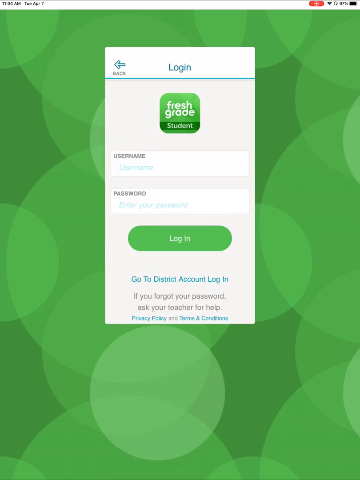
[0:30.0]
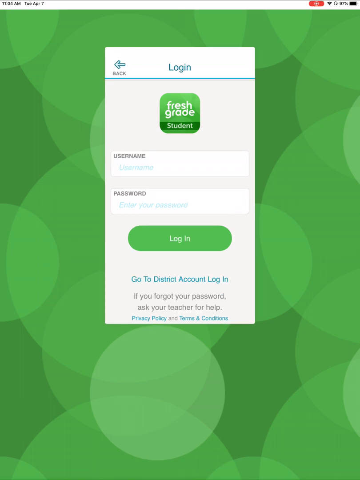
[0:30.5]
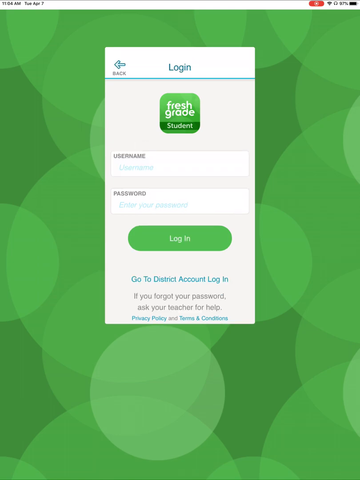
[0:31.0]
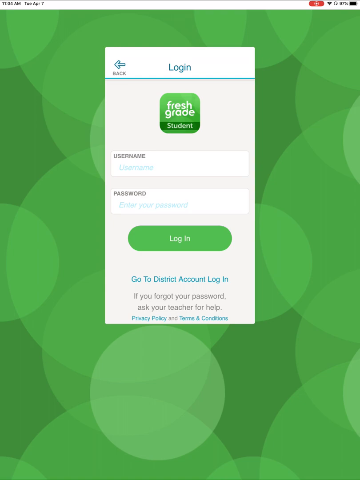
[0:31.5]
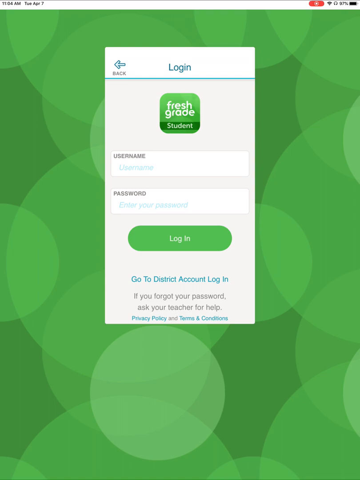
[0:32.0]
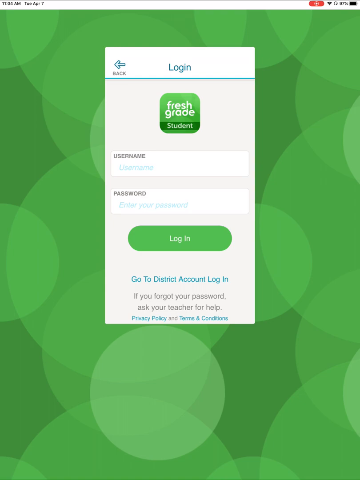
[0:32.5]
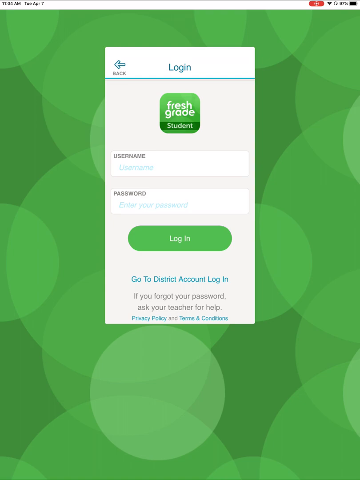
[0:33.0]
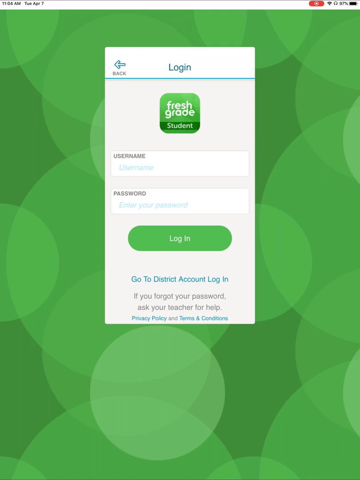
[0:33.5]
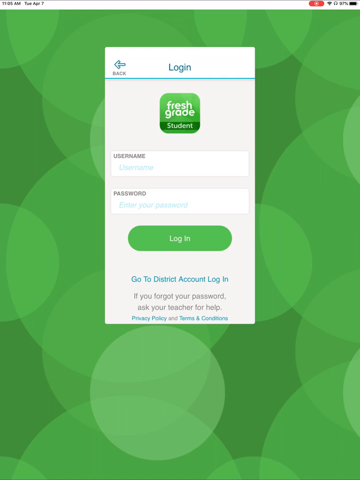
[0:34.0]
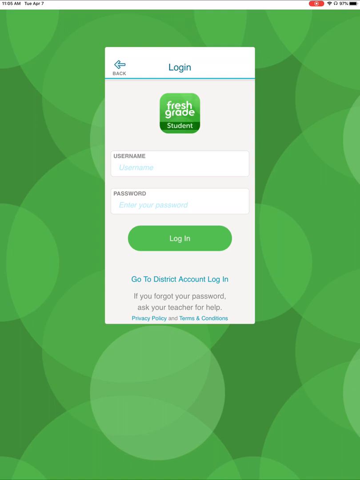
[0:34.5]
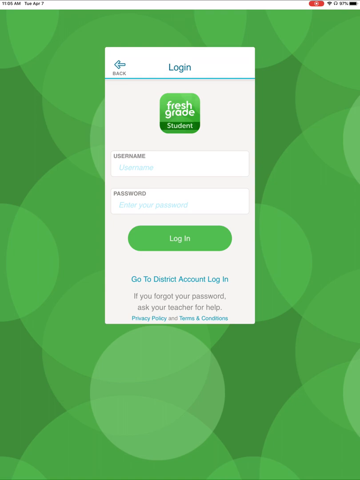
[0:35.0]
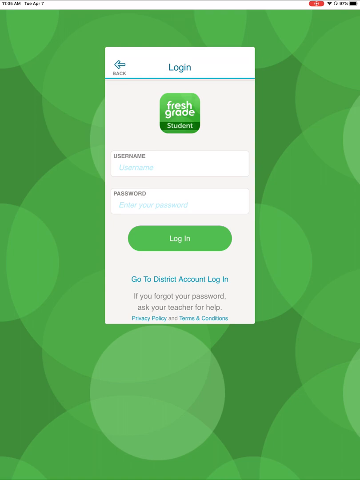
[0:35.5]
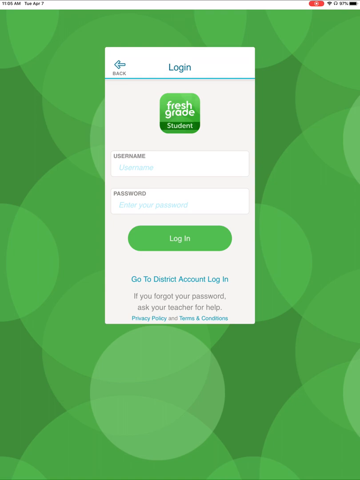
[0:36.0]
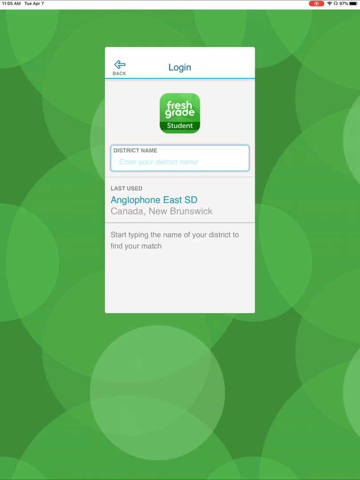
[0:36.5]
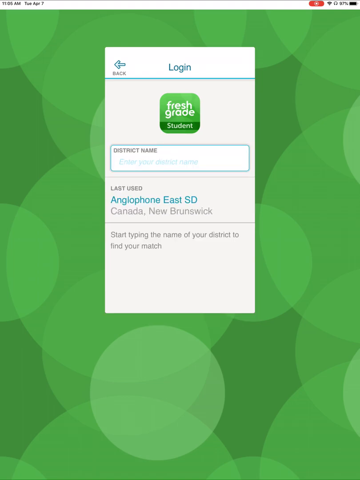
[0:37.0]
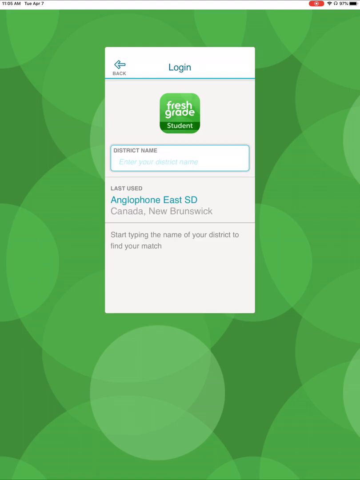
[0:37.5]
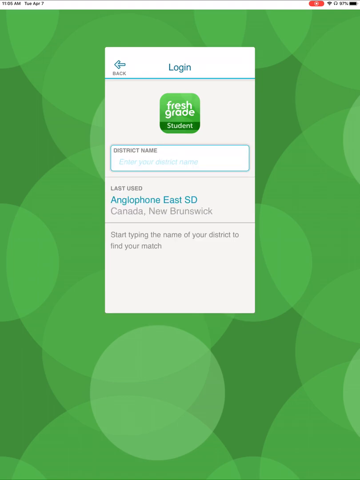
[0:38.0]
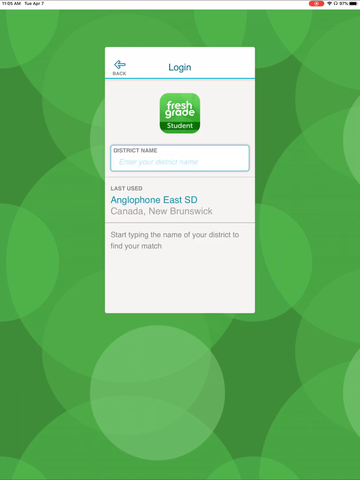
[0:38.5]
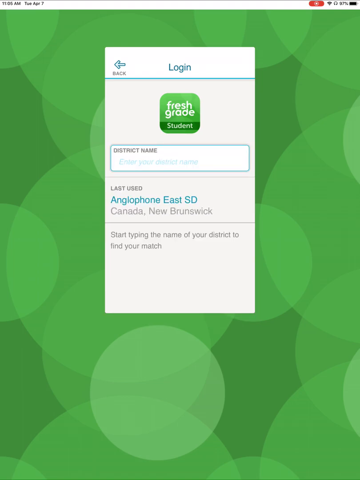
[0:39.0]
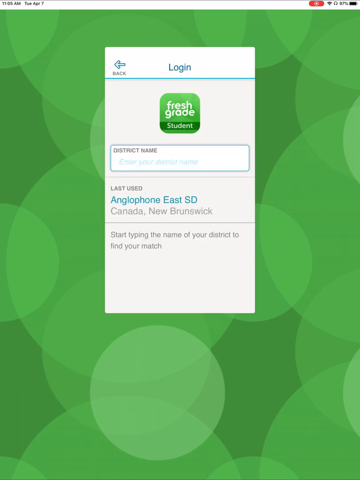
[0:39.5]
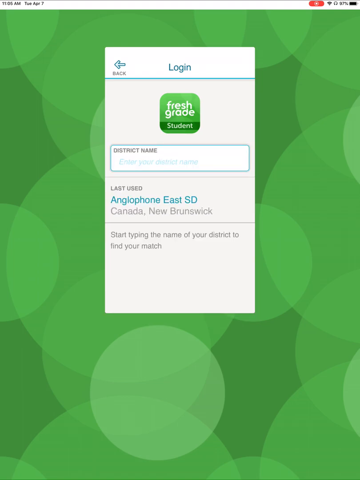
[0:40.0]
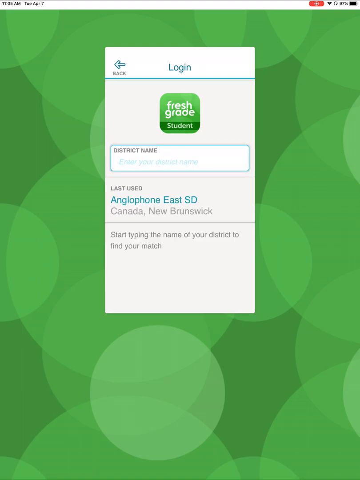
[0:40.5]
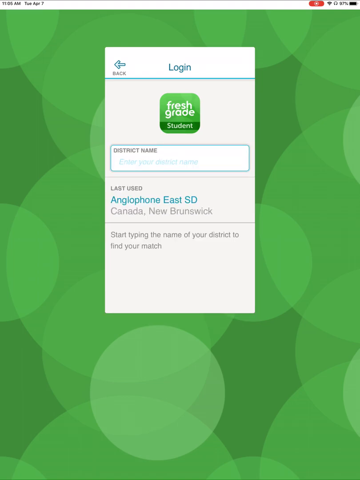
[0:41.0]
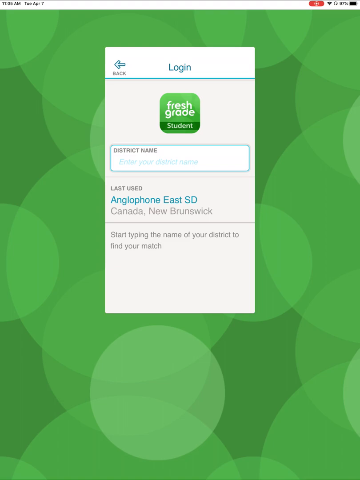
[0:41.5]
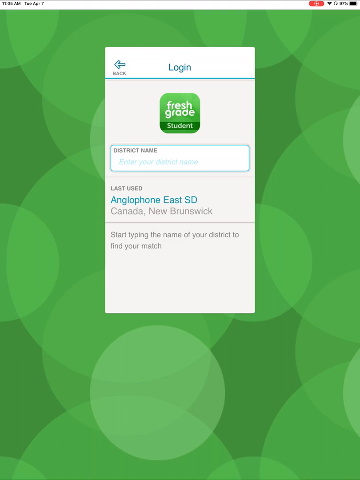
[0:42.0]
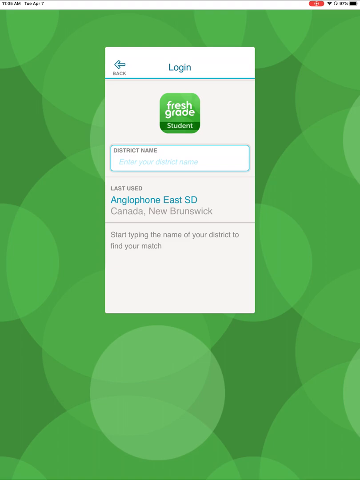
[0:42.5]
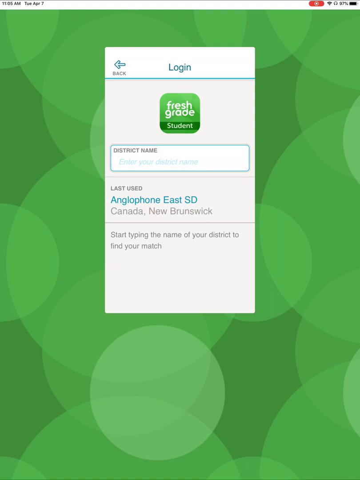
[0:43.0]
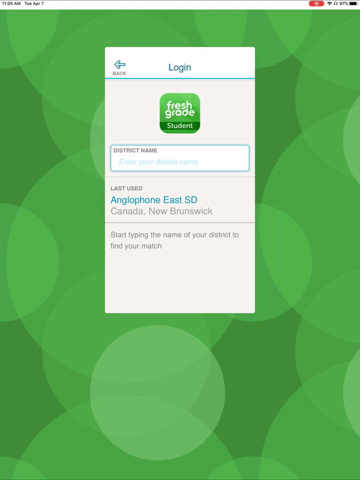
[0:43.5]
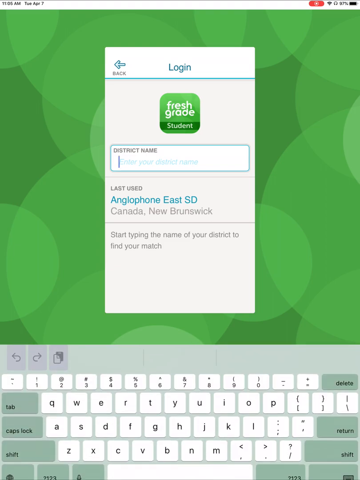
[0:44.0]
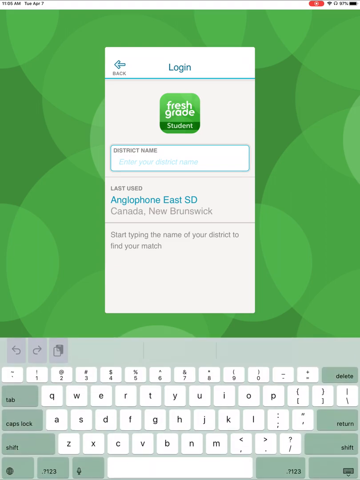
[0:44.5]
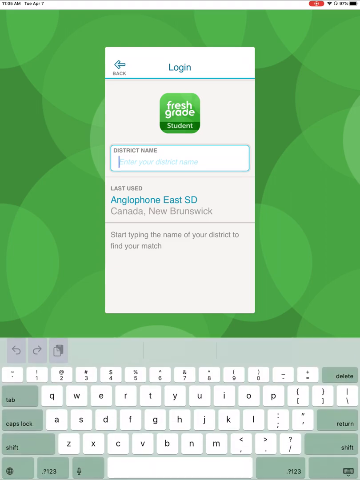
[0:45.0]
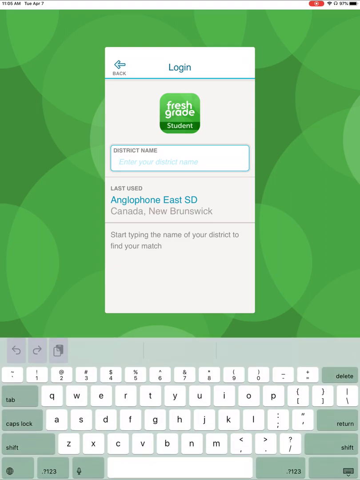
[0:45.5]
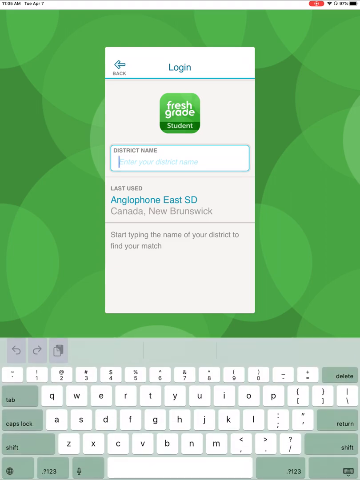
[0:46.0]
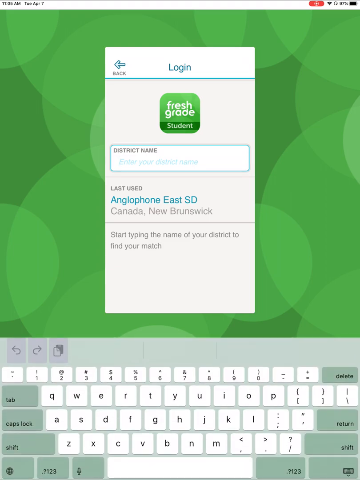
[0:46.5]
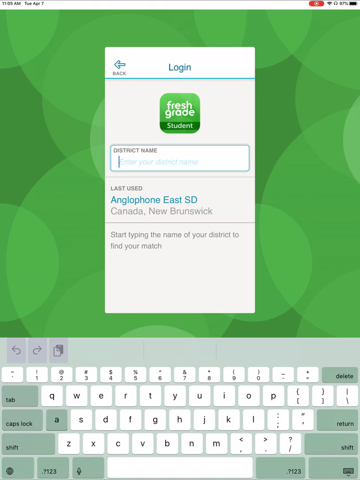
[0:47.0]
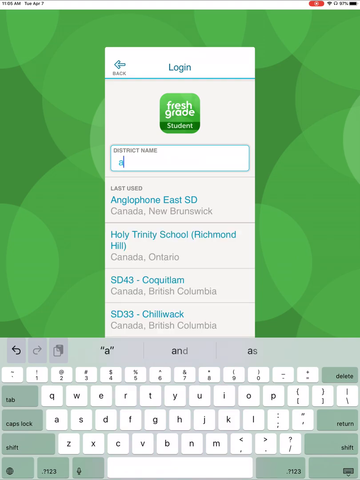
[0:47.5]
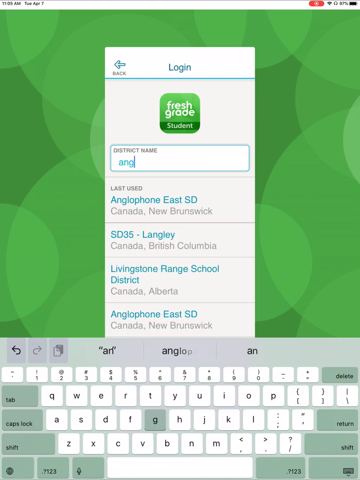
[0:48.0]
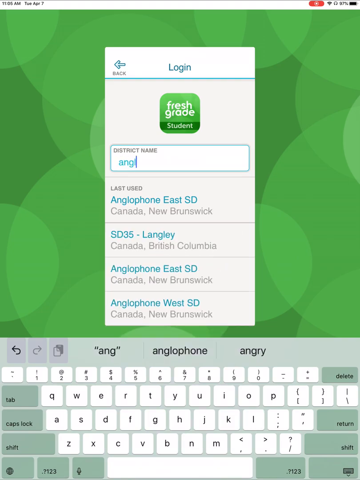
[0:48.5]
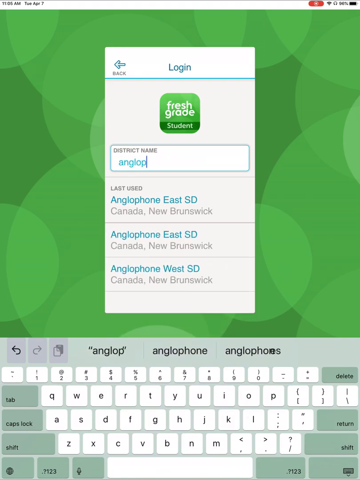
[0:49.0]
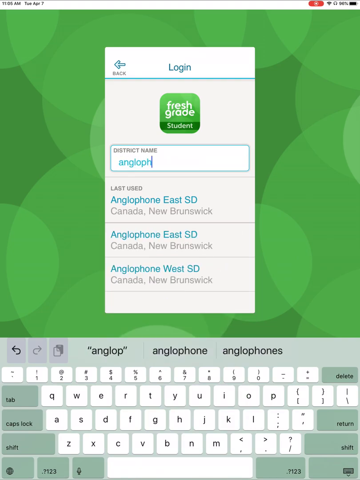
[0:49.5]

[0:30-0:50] The login screen stays in view, and the user clicks on "Go To Direct District Account Login". An area pops up for entering a district name, with a last used option below showing "Anglophone East SD", Canada New Brunswick. The iPad keyboard pops up and the user types "anglophone", and options appear below, such as the last used option, Anglophone East, and Anglophone West. The text and the last used options are in a light blue color, and the country of each location is in a light gray color, with the options separated by thin gray lines.